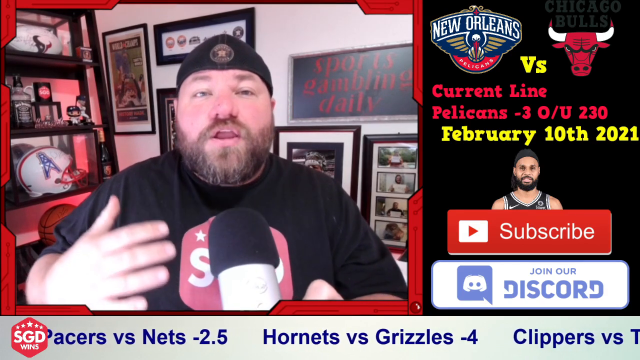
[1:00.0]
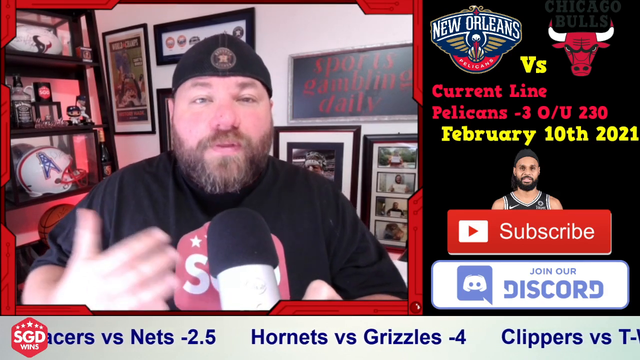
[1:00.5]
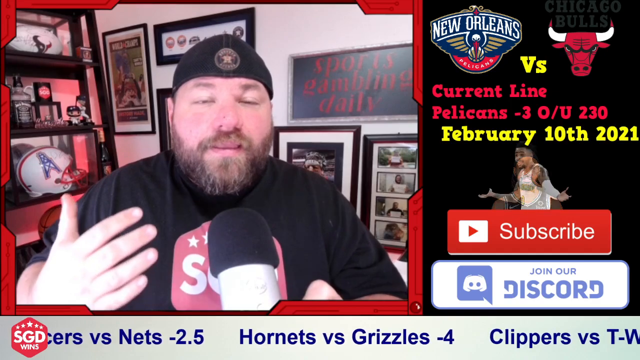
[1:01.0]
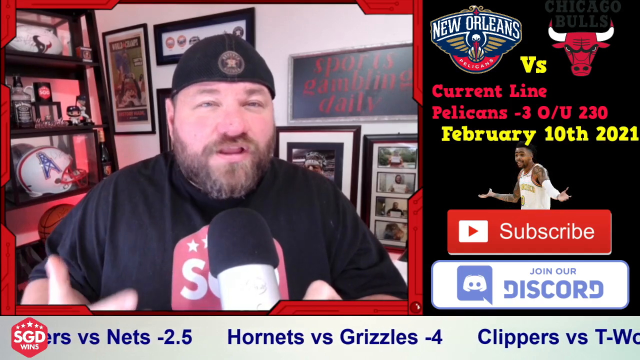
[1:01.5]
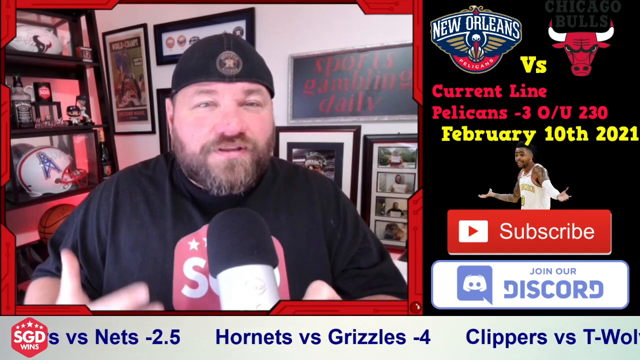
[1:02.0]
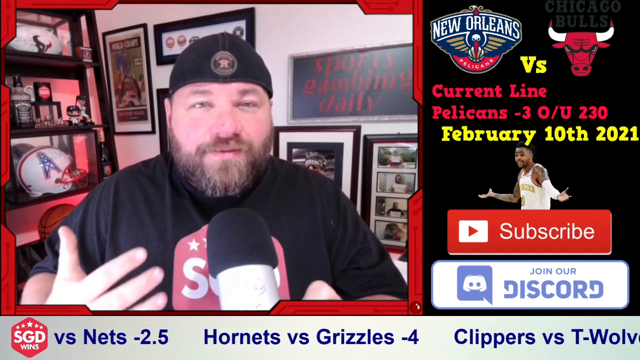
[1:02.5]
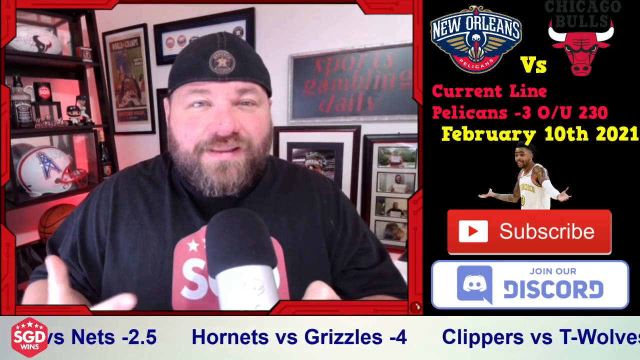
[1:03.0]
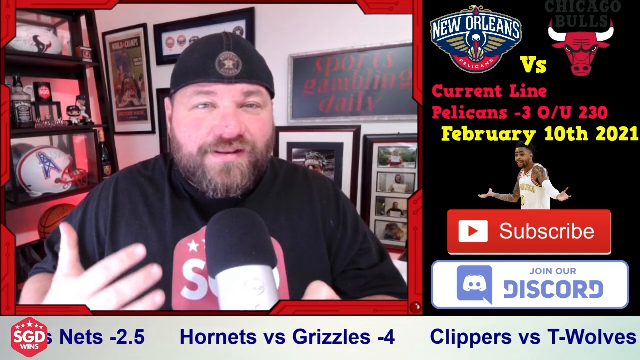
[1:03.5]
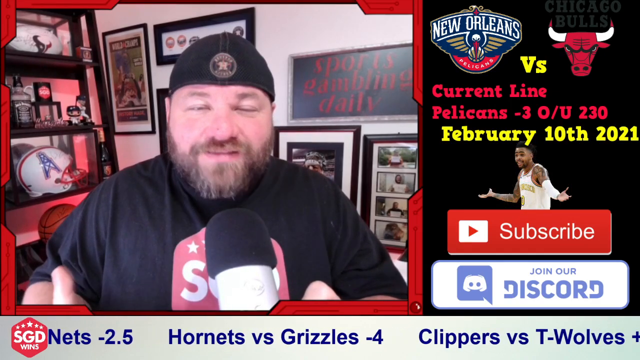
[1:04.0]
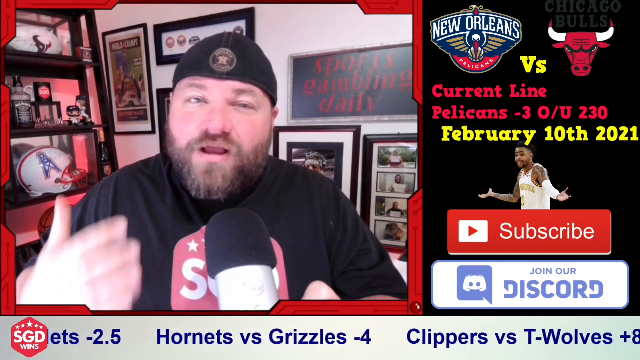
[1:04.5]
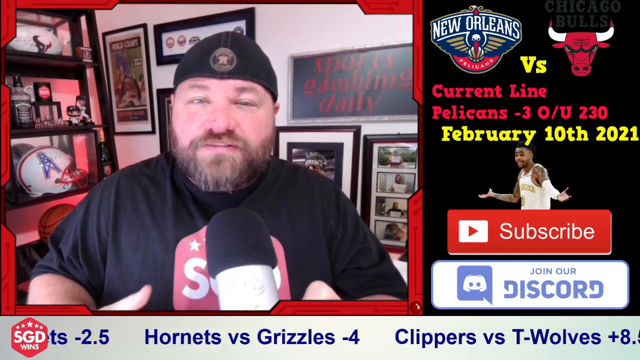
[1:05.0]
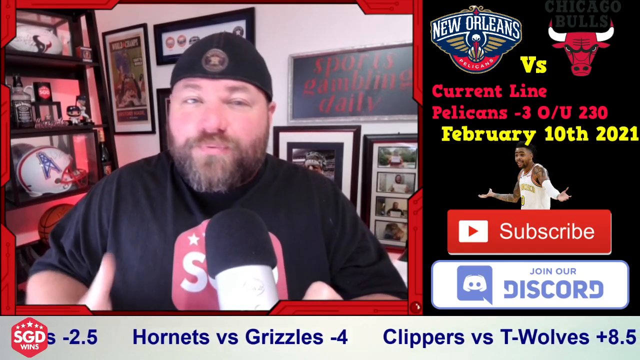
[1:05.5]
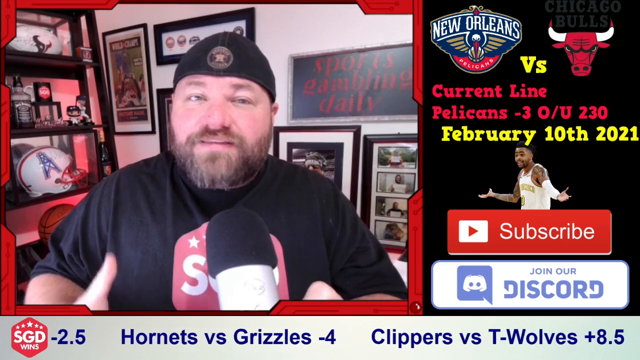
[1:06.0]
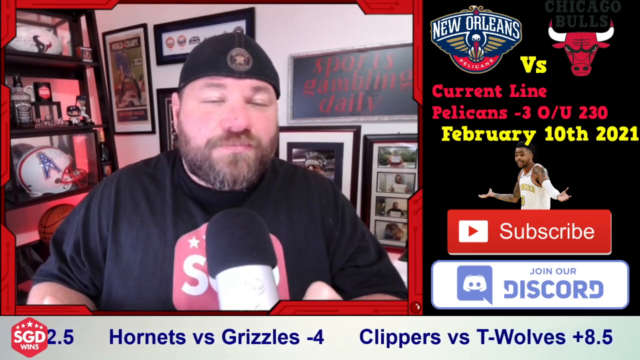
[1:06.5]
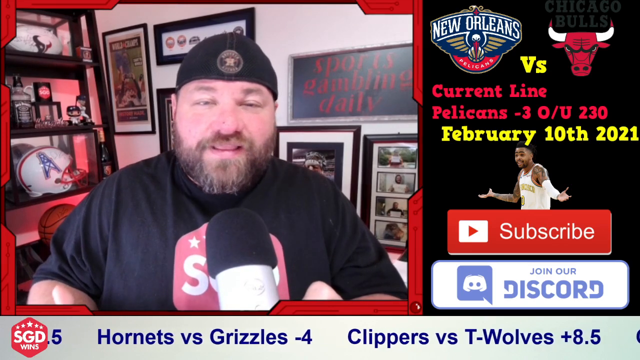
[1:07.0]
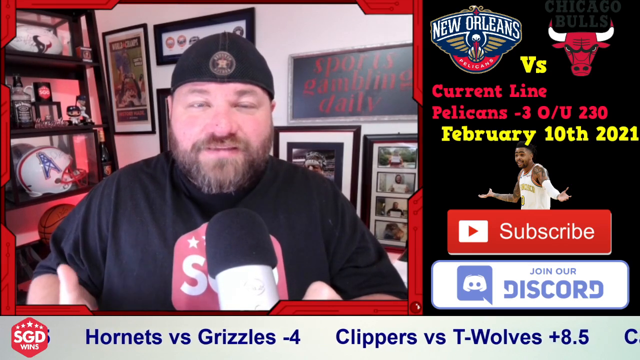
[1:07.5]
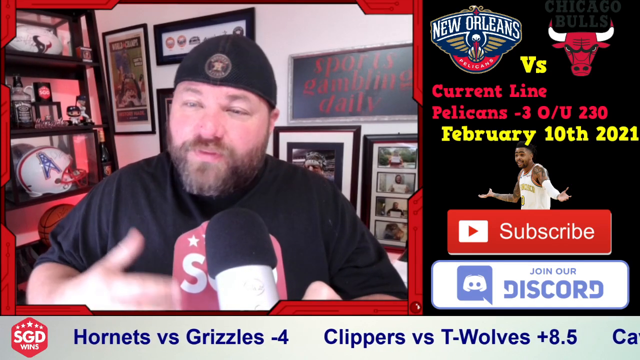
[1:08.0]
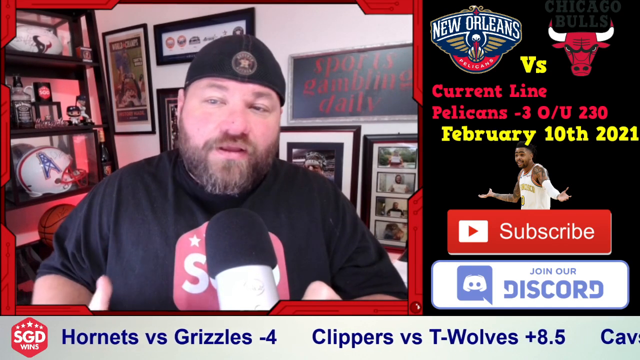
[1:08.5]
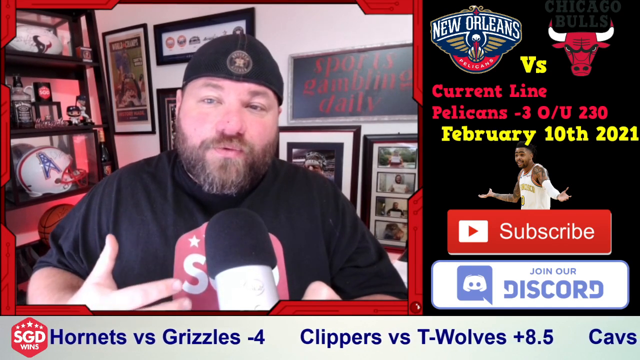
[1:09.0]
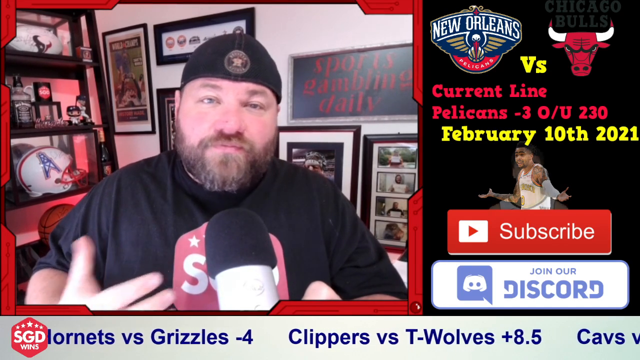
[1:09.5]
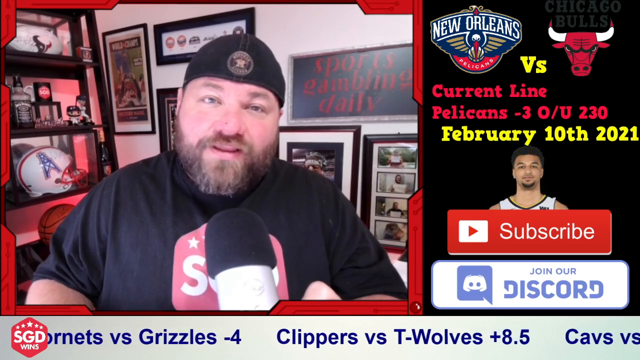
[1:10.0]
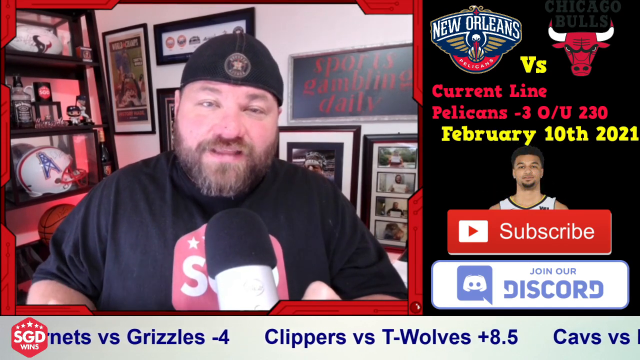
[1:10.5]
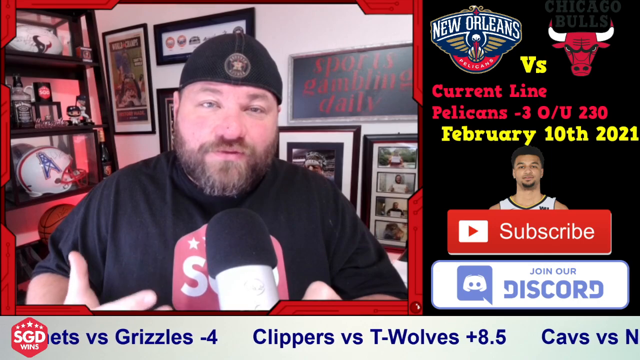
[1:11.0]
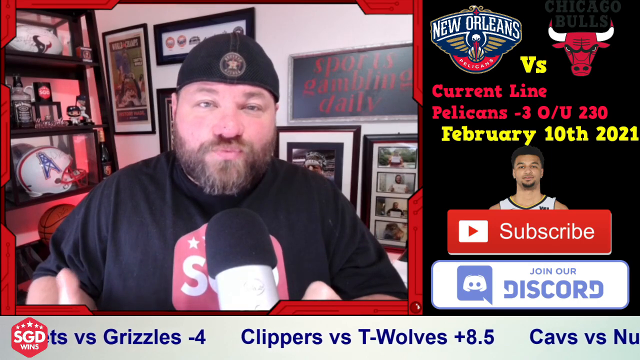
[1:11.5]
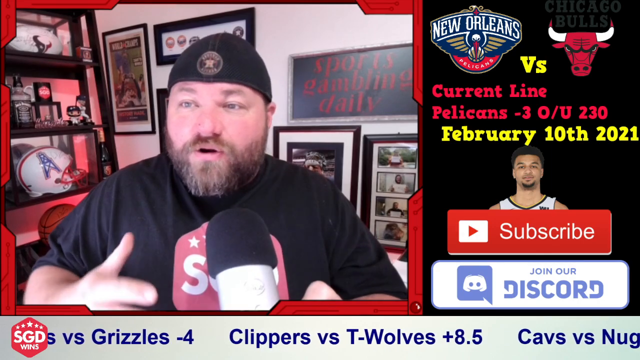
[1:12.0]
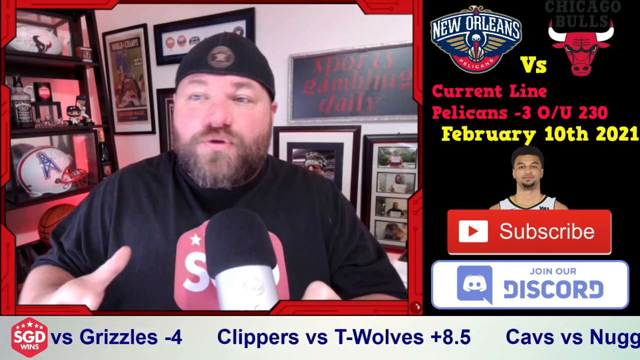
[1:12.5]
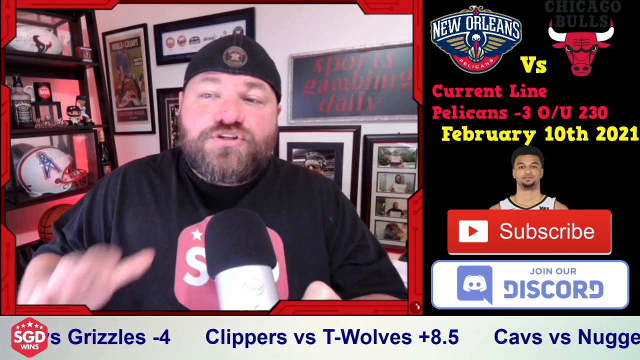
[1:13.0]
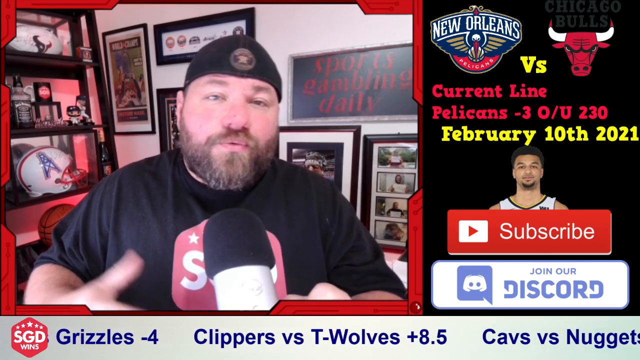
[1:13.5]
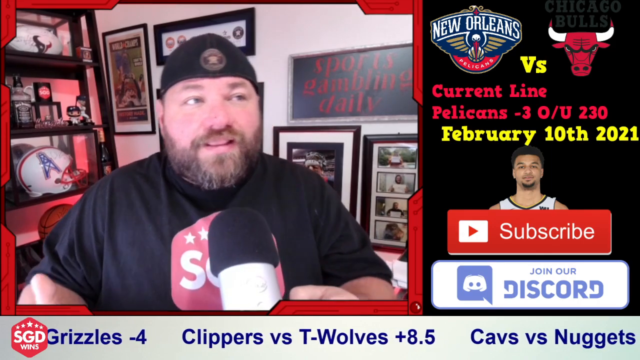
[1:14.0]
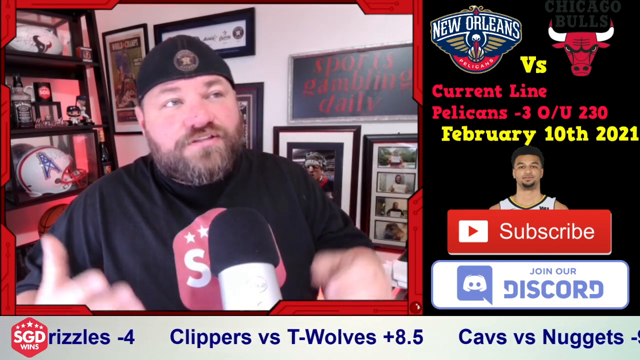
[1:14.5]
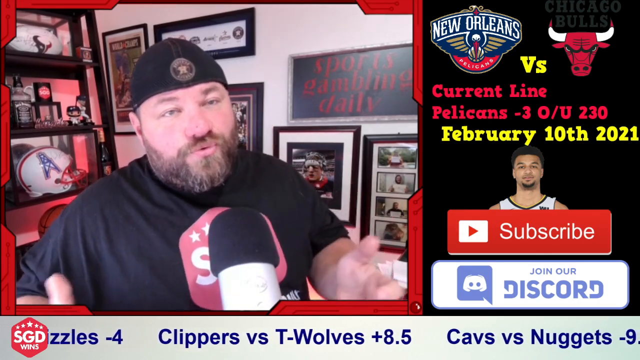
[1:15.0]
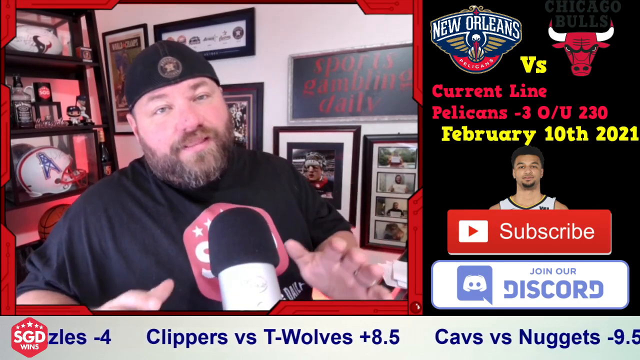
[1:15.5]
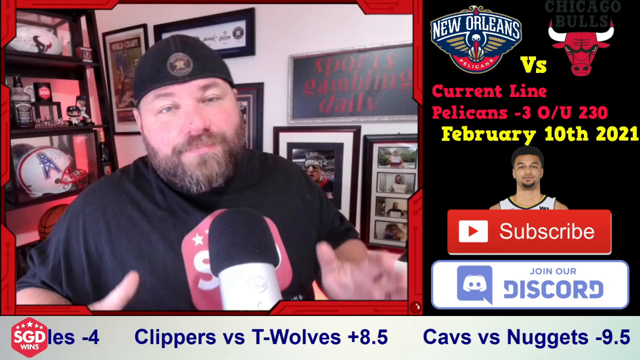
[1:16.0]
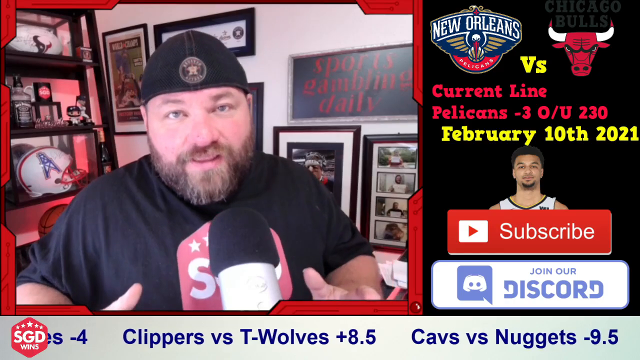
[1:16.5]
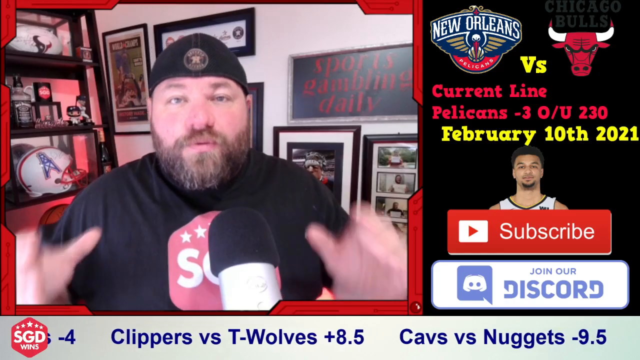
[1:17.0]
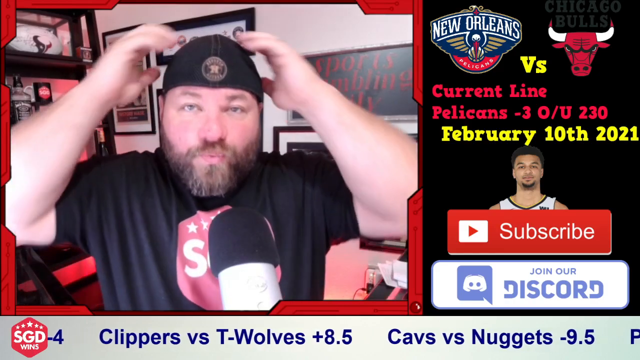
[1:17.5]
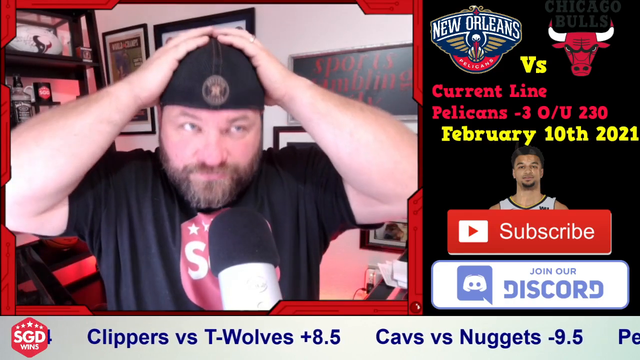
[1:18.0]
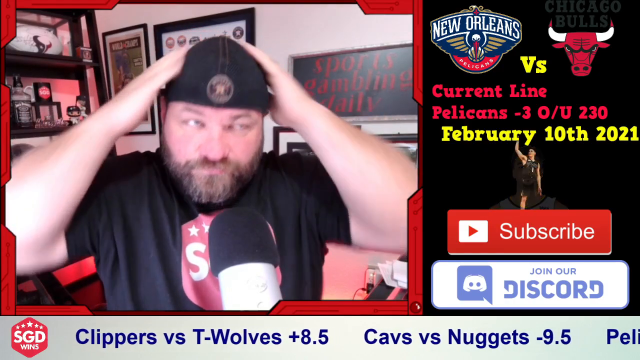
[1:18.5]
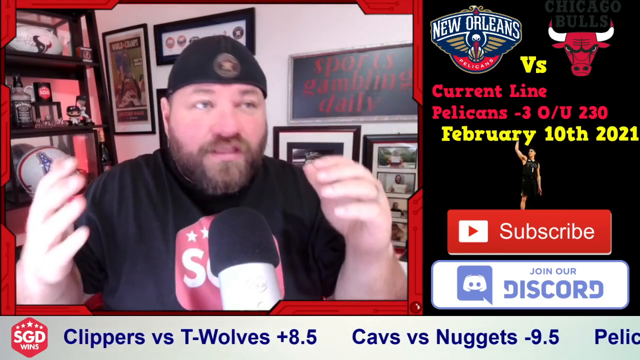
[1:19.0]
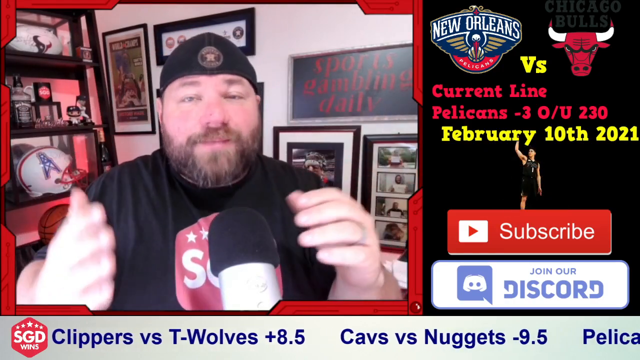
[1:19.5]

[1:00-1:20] A man talks, or is being interviewed, on the left side of the screen. On the right side is information about the New Orleans Pelicans versus the Chicago Bulls. A picture of an NBA player on the right side keeps changing: sometimes it shows a player maybe running or talking on the court, and other times a player looking straight at the camera and smiling. The information above the changing pictures always stays the same: "New Orleans Pelicans versus" and a picture of a red bull with two white horns, one on the left and one on the right of its head, then "current line Pelicans -3 O/U 230", and "February 10th, 2021" in yellow font.